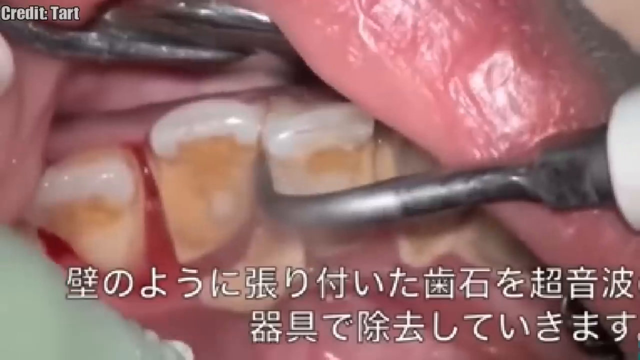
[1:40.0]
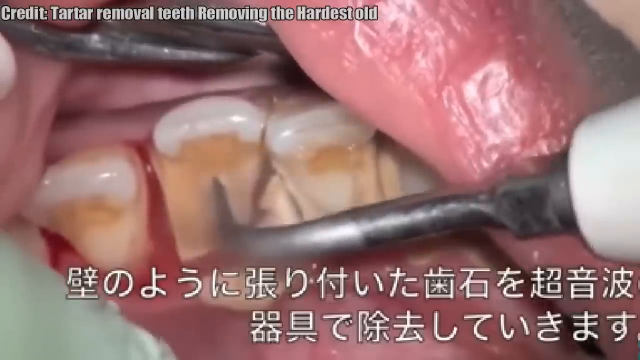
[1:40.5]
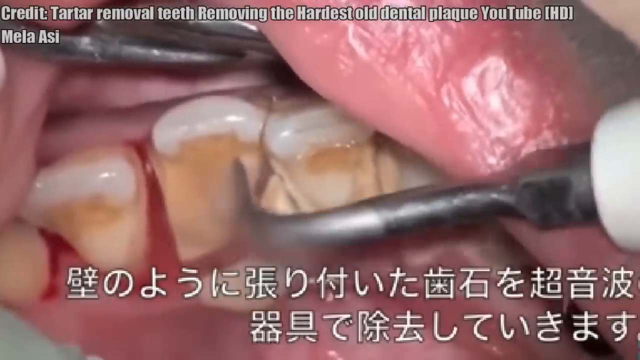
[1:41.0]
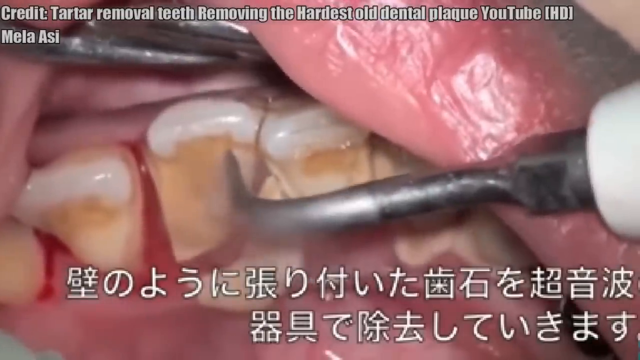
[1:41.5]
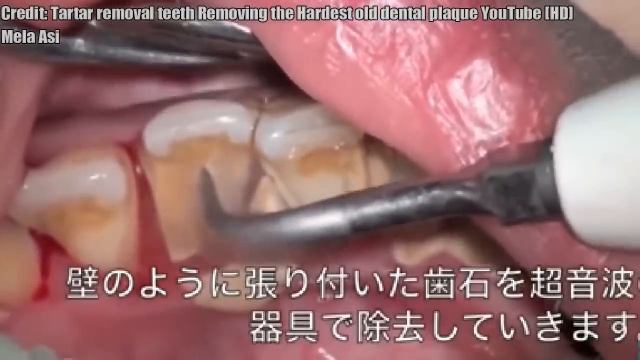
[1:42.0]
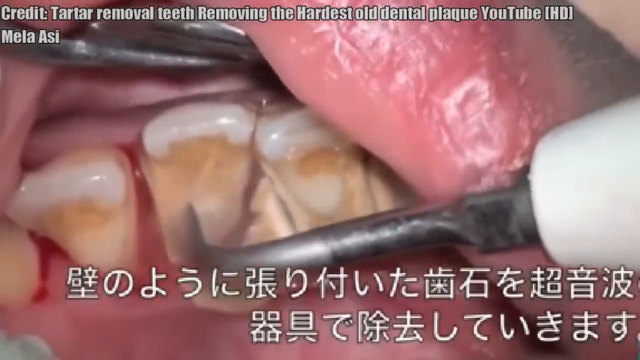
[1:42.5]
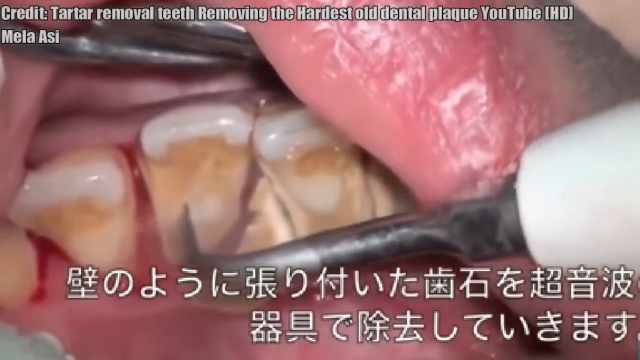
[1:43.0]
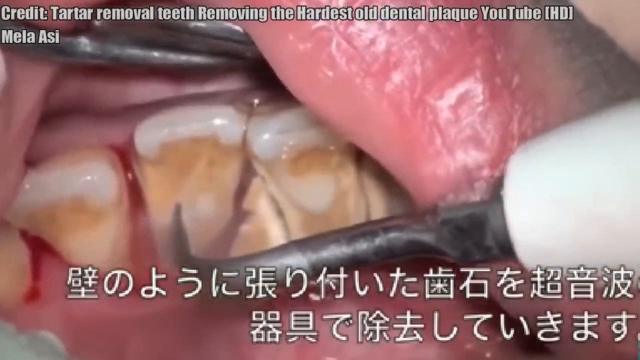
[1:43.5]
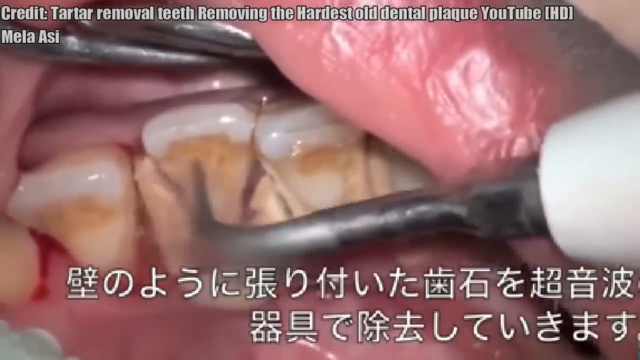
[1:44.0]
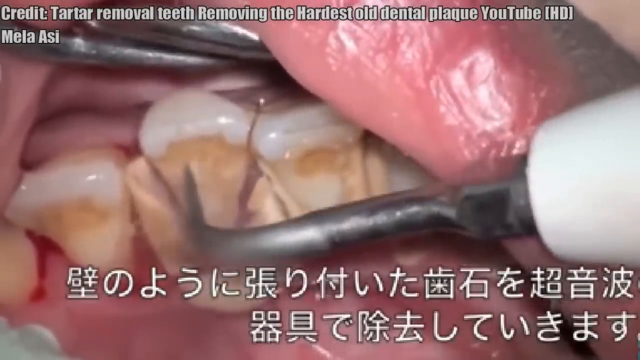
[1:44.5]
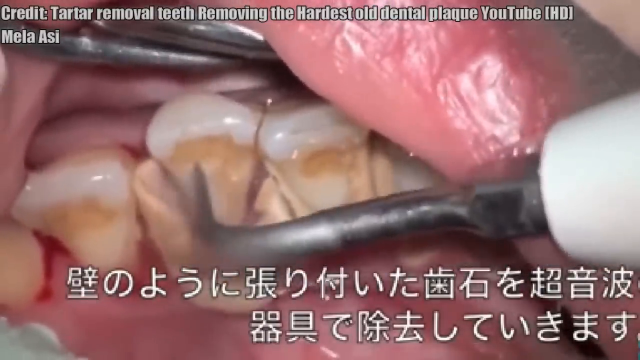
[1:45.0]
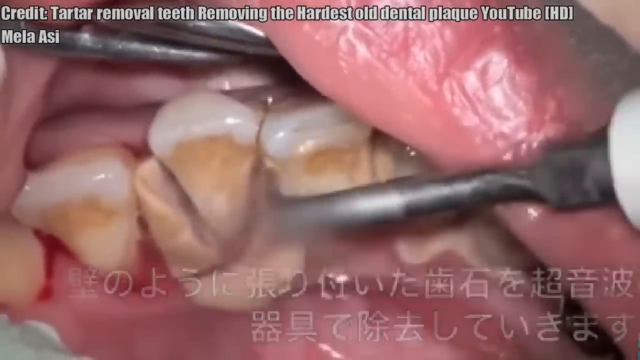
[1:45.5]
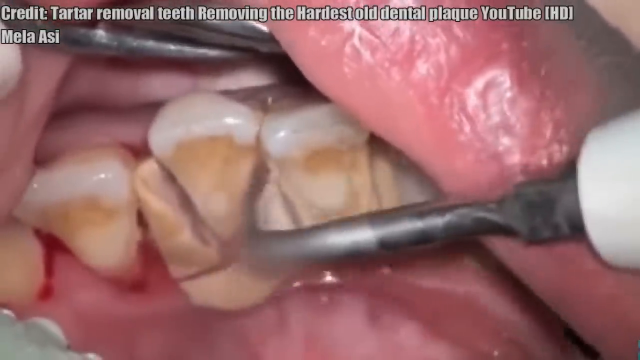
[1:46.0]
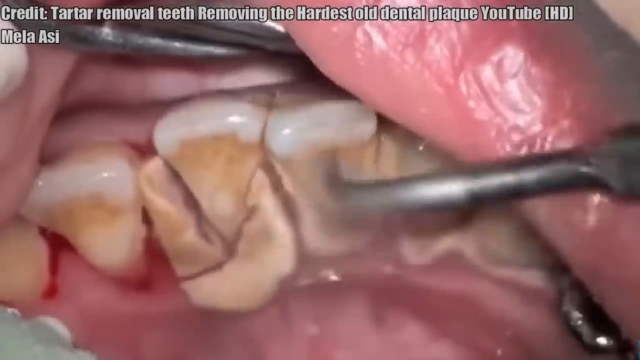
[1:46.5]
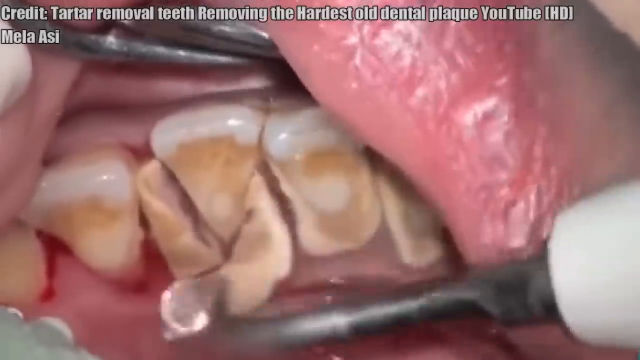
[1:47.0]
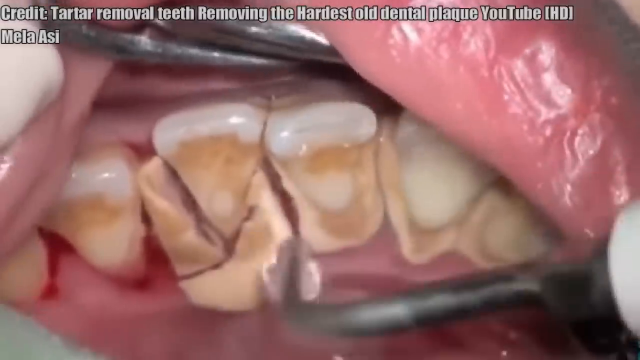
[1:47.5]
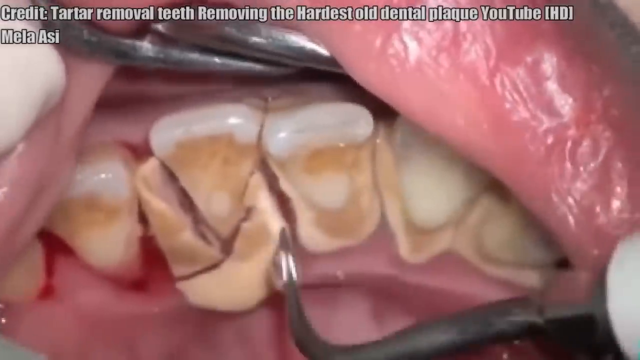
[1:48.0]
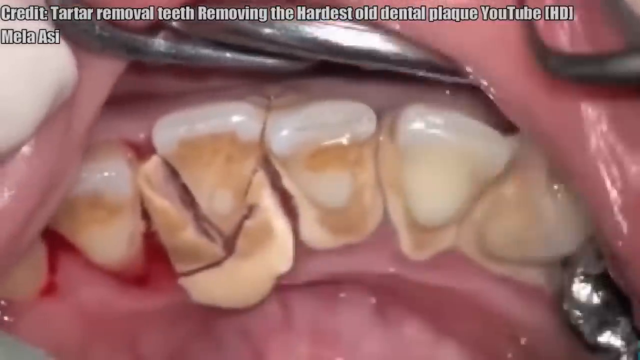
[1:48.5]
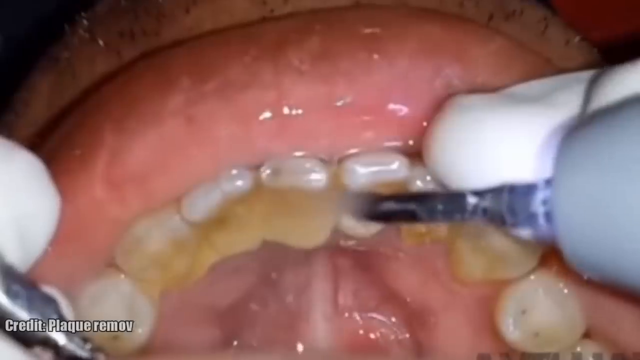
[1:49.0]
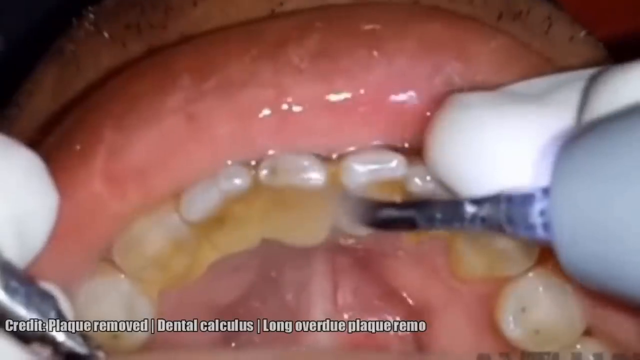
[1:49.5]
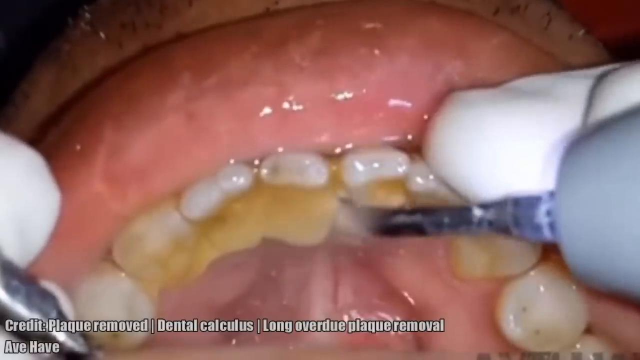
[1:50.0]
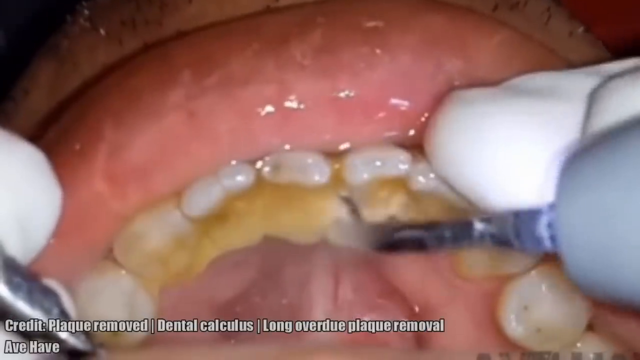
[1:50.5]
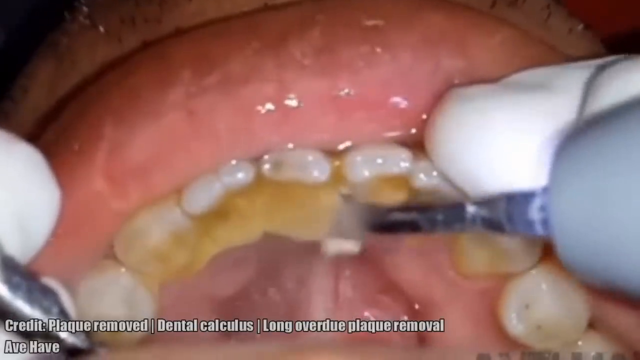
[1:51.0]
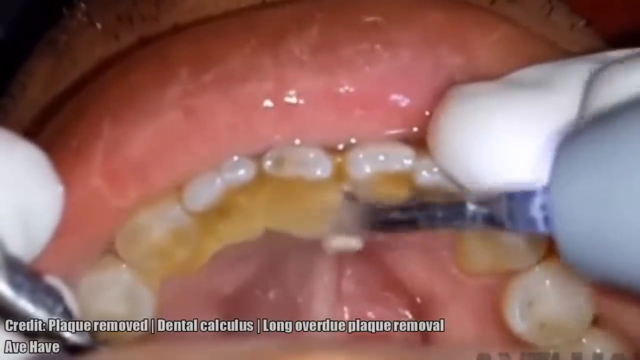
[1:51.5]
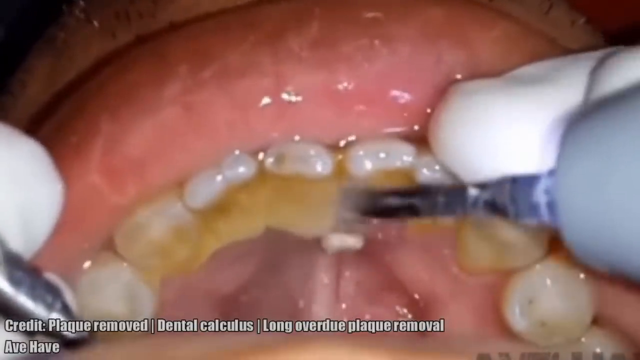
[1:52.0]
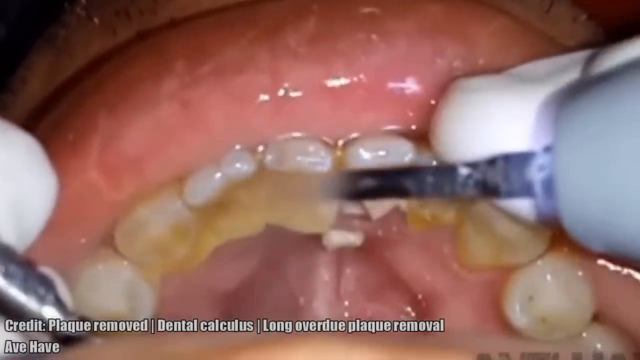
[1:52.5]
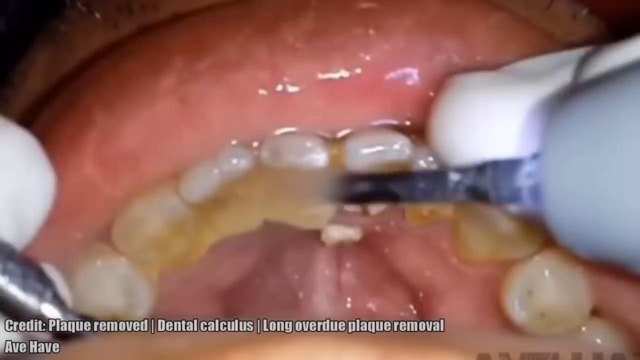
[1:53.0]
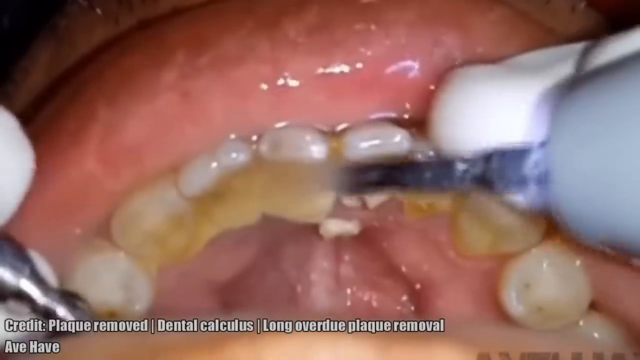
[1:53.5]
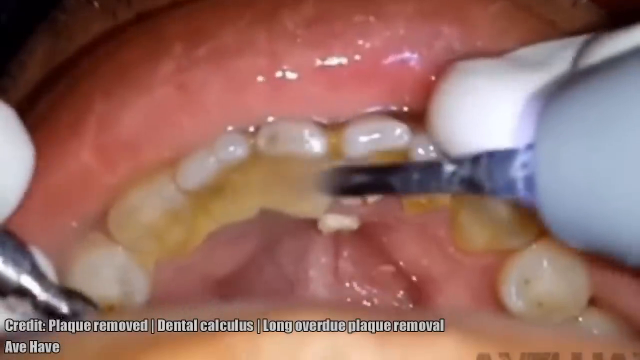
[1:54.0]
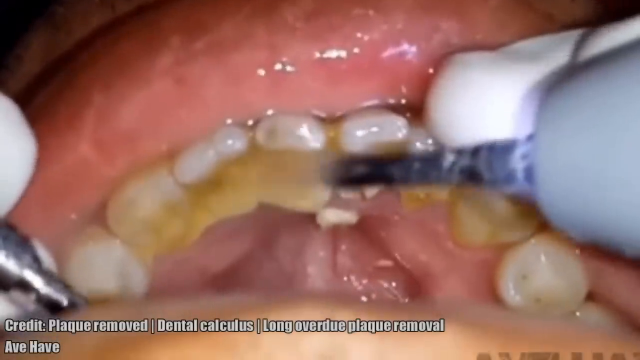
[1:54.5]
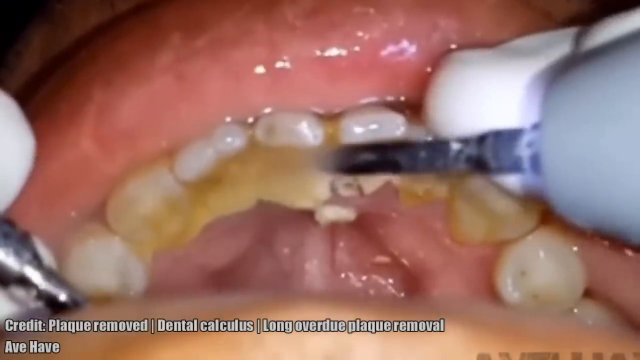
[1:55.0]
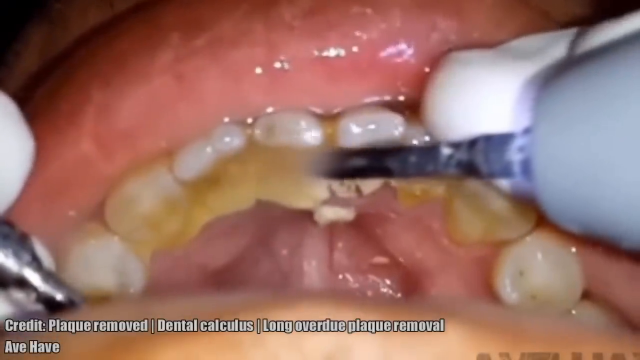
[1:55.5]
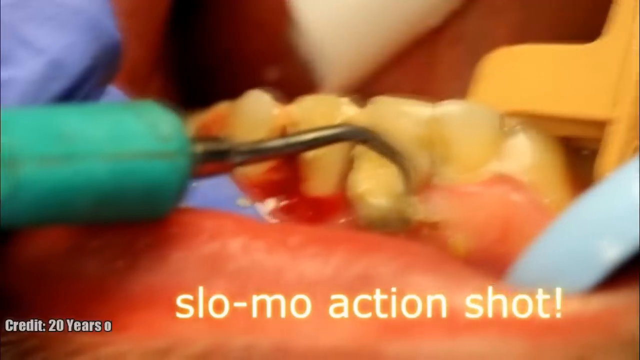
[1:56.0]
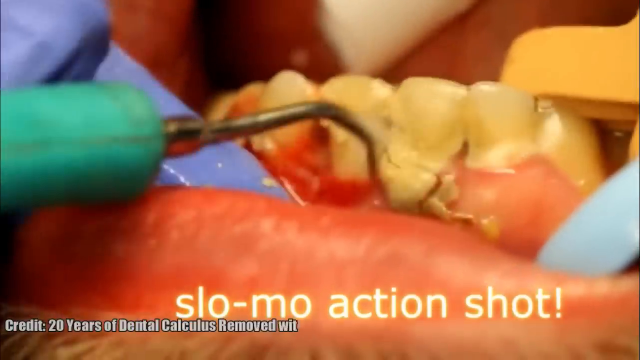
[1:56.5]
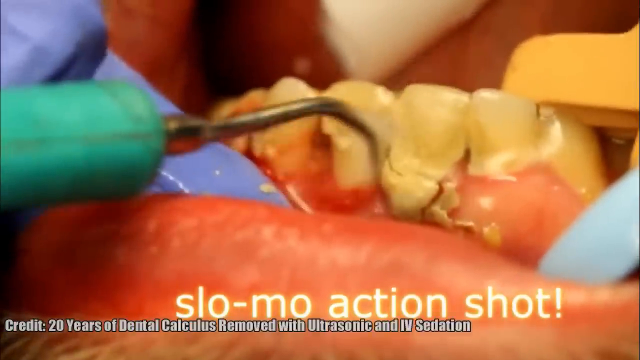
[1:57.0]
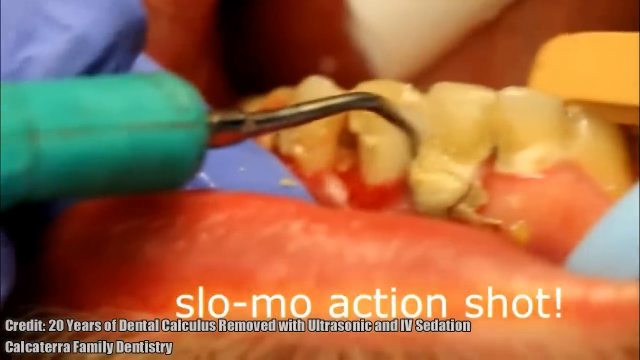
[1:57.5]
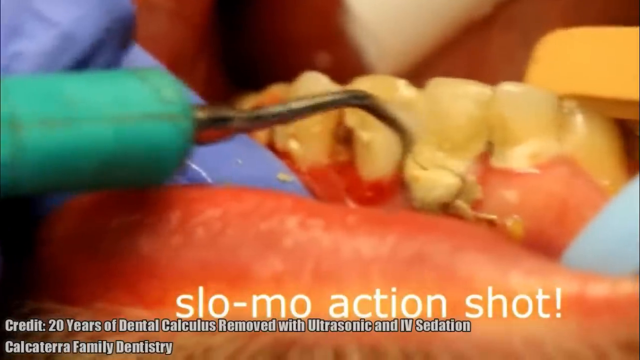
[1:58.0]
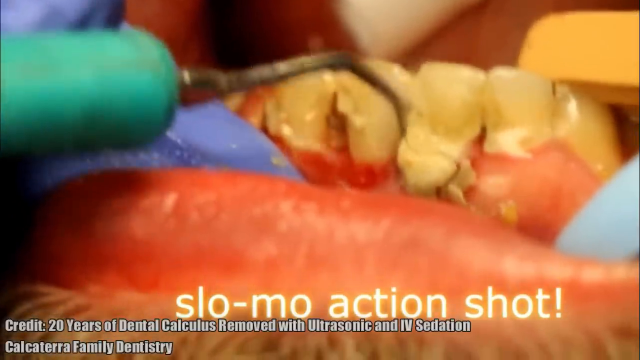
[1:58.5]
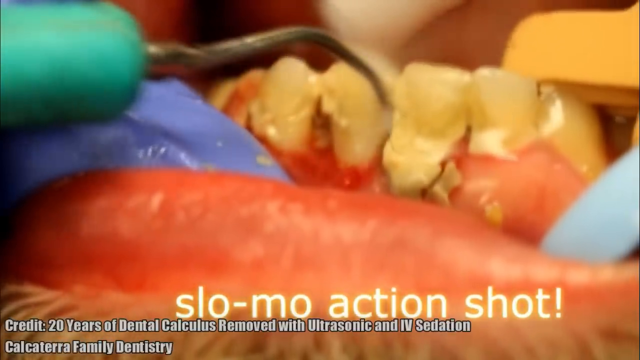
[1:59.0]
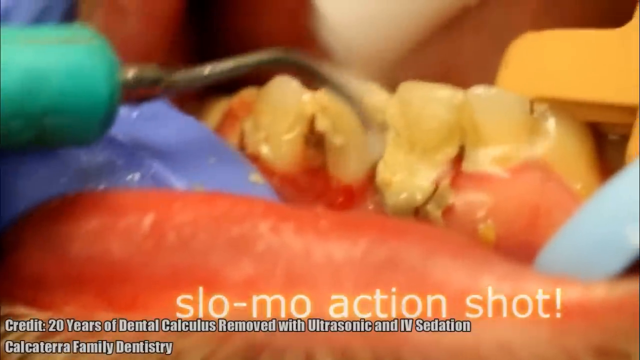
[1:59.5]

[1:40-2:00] Another dental cleaning removes plaque from the back of the bottom row of teeth. Some discolored parts seem to be staining or darker parts of the tartar. A pick picks at the tartar to release it from the tooth, and it cracks off in large pieces at the bottom near the gum line, exposing the shape of the natural tooth. Another cleaning shows the back side of a person's front teeth, where a large, thick layer of tartar, about three times bigger than the teeth, is picked away. Another image has the text "slow motion action shot" on top and shows the bottom row of a person's teeth being cleaned, with large scales of tartar coming off around the tooth. A tooth is actively bleeding, and the gum line underneath it is filled with blood.